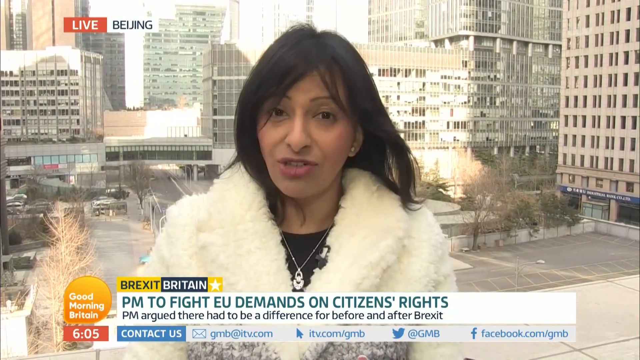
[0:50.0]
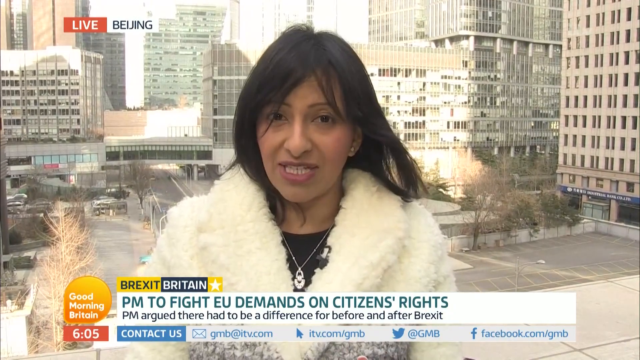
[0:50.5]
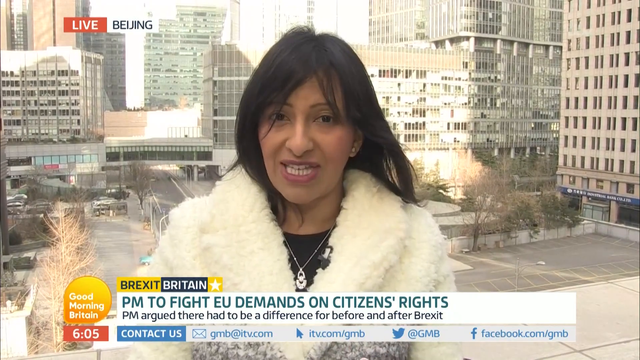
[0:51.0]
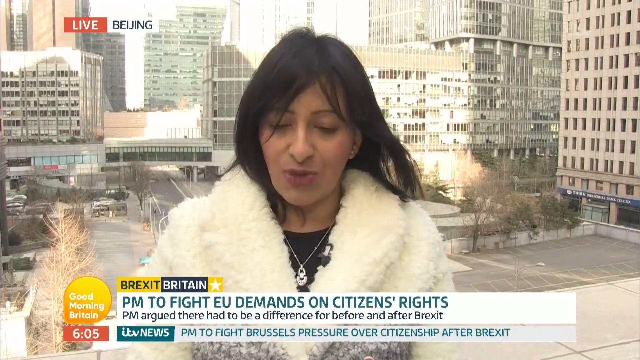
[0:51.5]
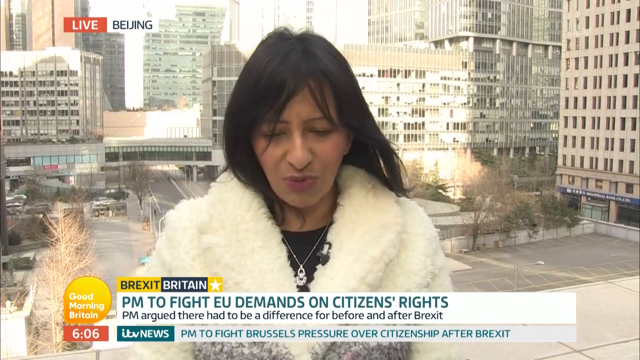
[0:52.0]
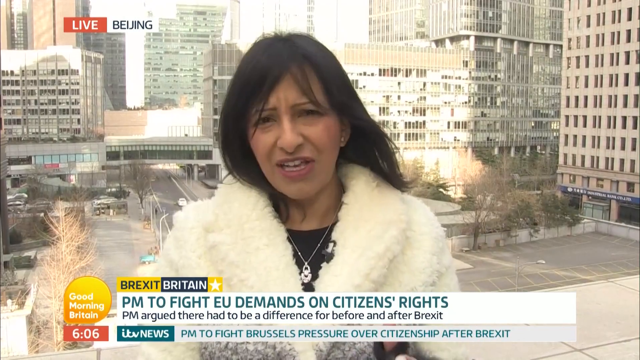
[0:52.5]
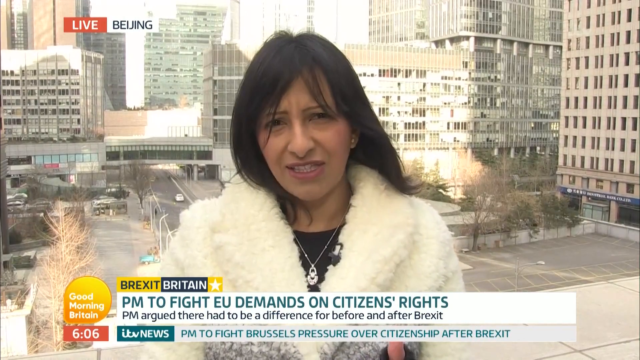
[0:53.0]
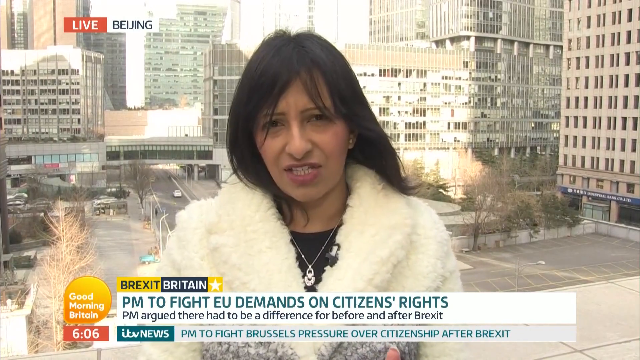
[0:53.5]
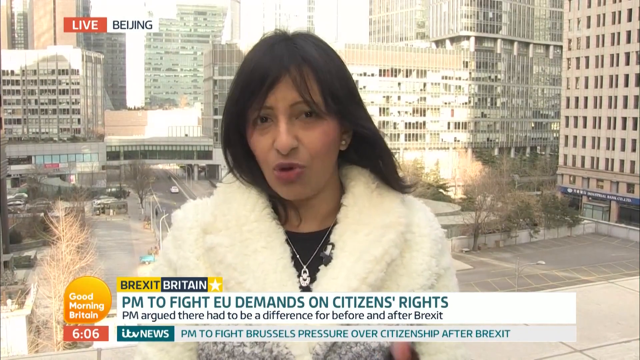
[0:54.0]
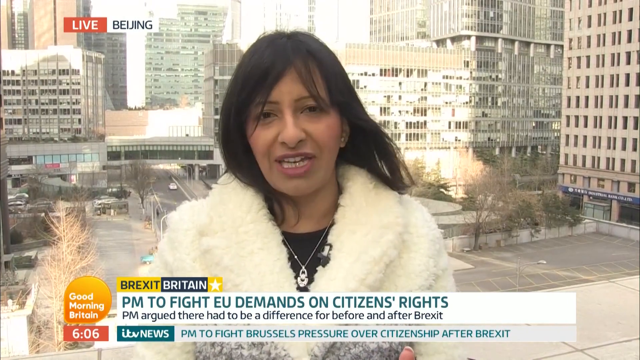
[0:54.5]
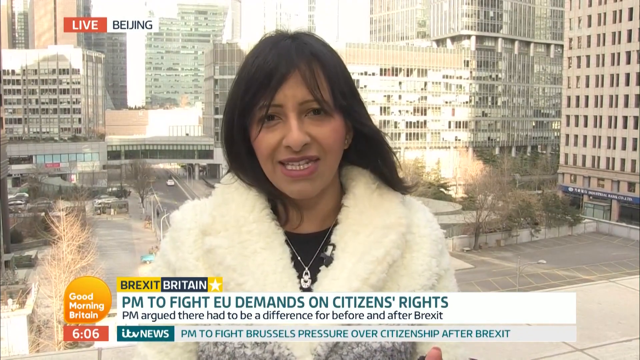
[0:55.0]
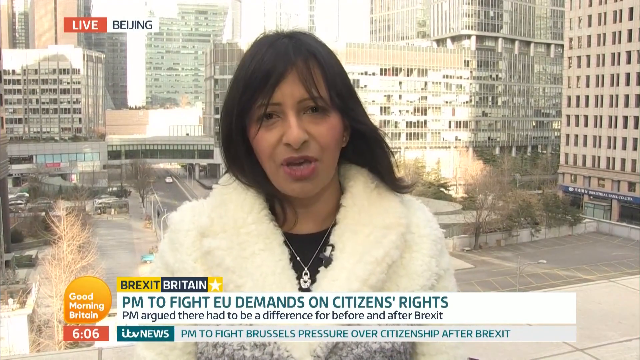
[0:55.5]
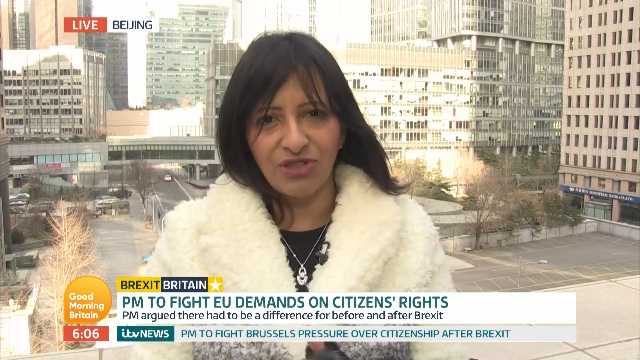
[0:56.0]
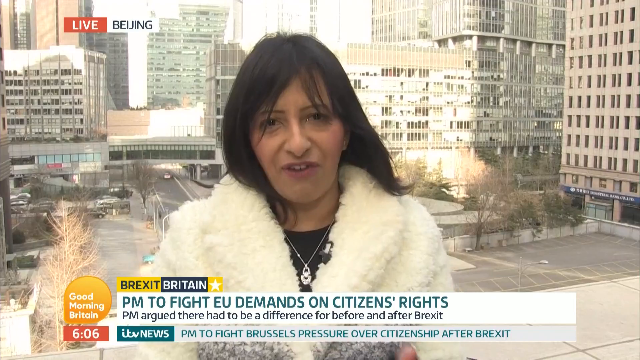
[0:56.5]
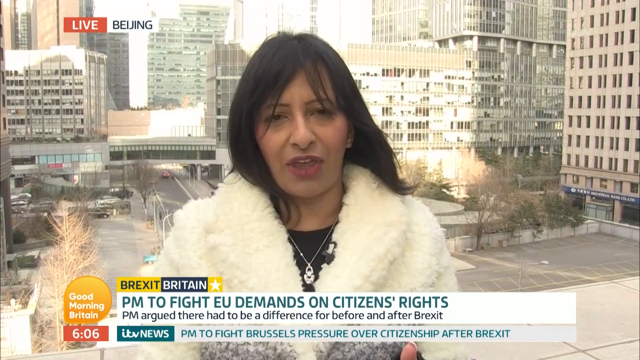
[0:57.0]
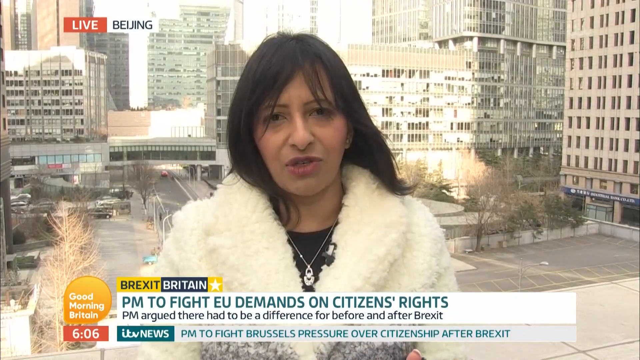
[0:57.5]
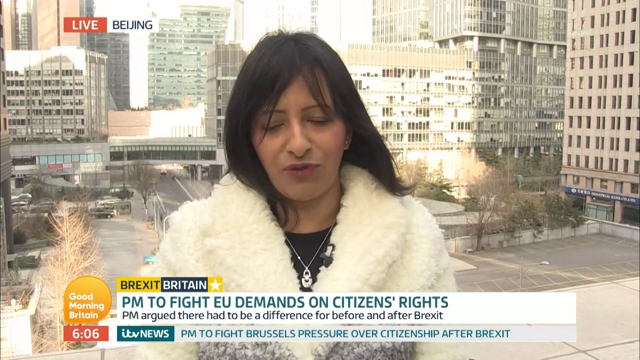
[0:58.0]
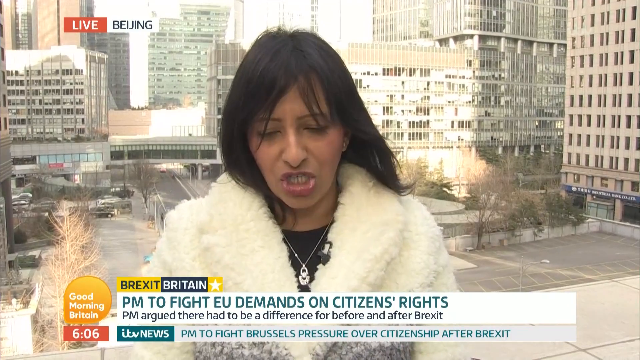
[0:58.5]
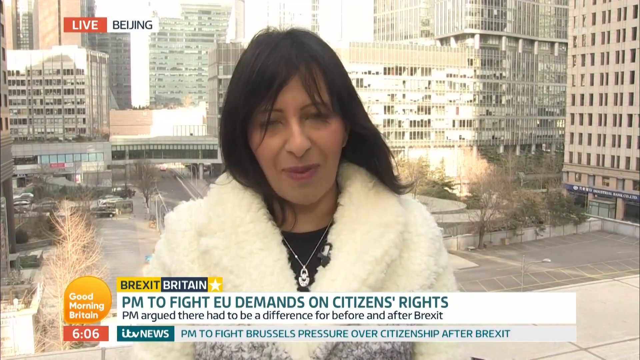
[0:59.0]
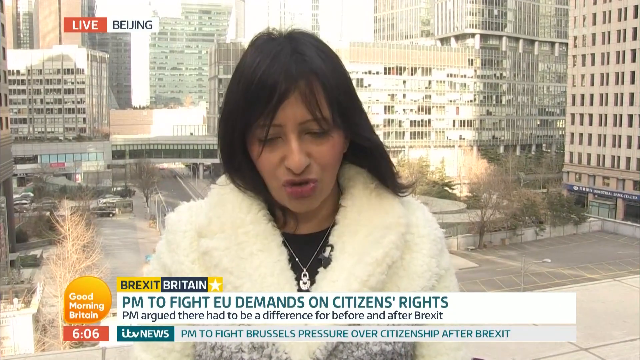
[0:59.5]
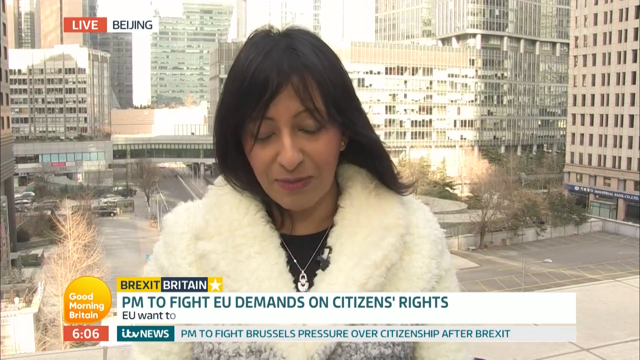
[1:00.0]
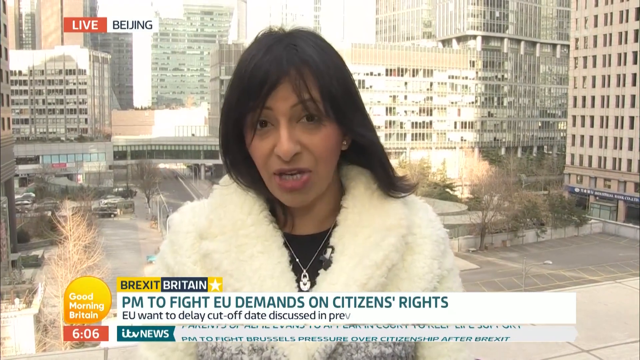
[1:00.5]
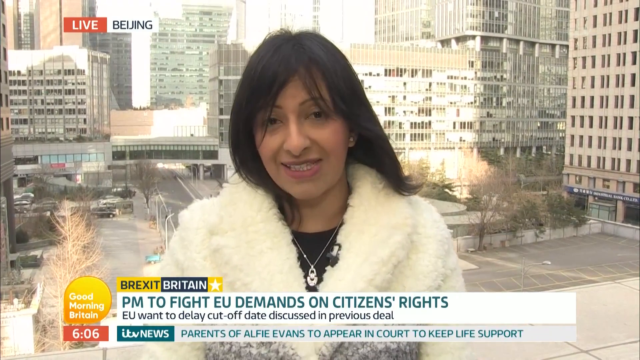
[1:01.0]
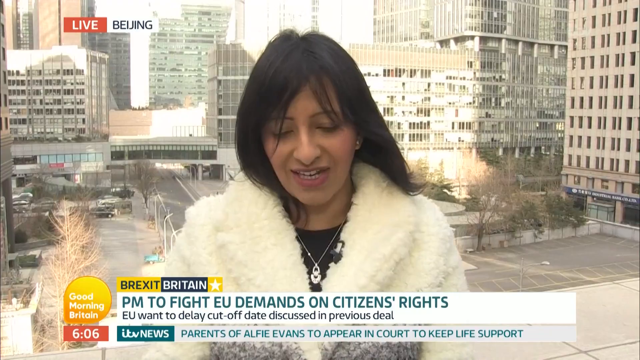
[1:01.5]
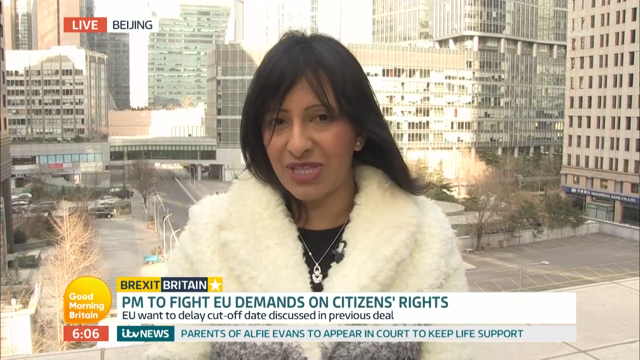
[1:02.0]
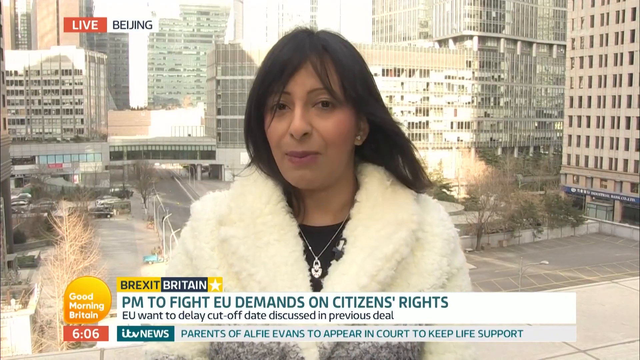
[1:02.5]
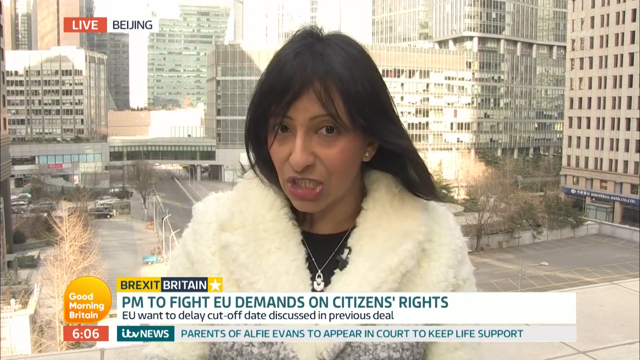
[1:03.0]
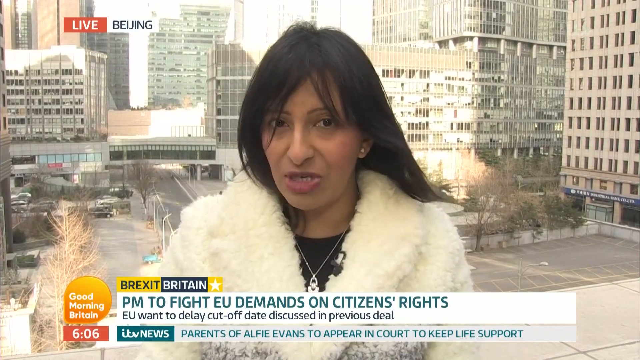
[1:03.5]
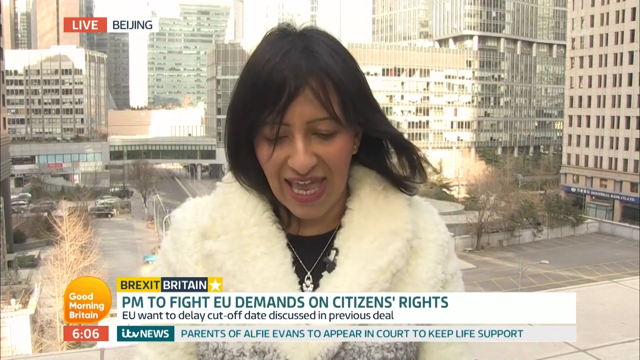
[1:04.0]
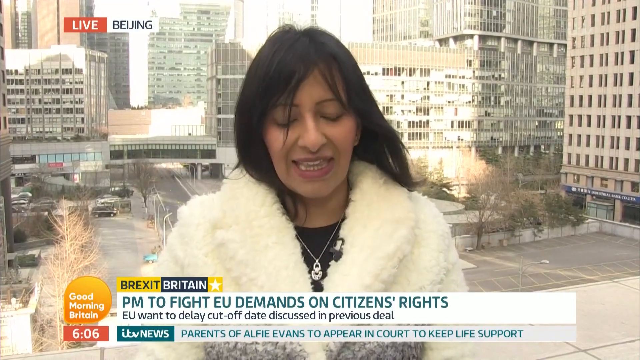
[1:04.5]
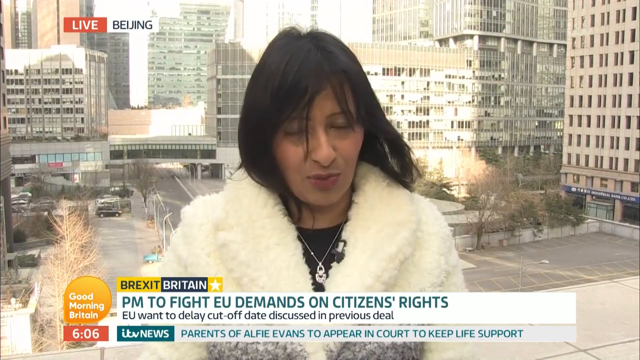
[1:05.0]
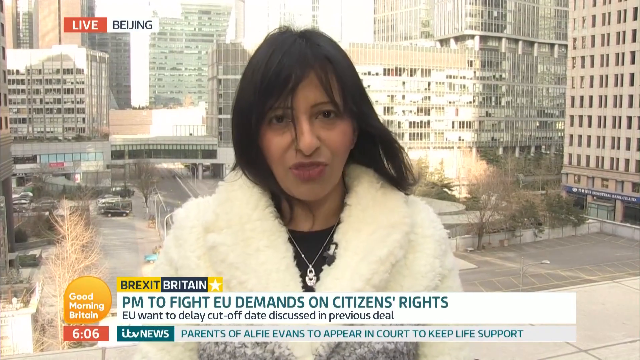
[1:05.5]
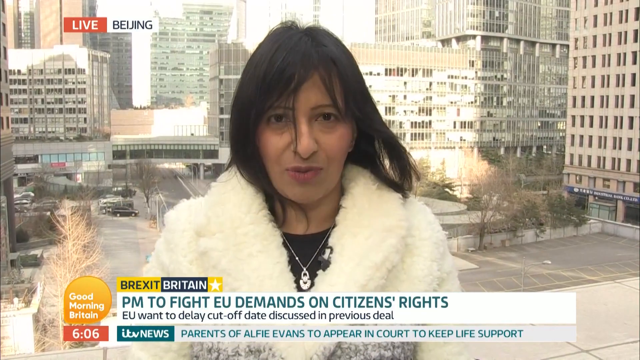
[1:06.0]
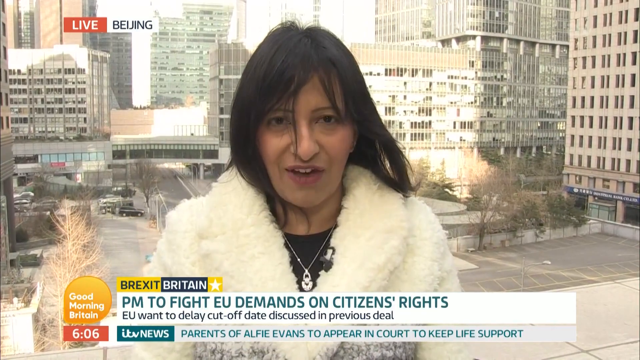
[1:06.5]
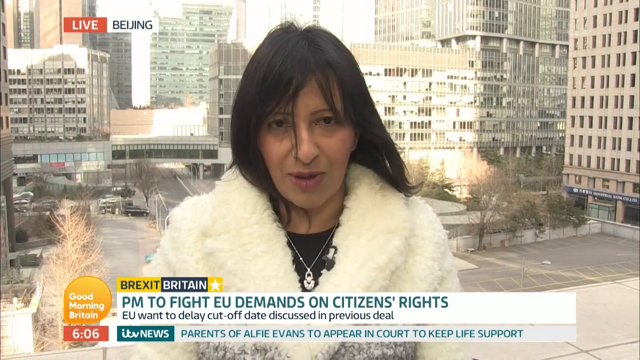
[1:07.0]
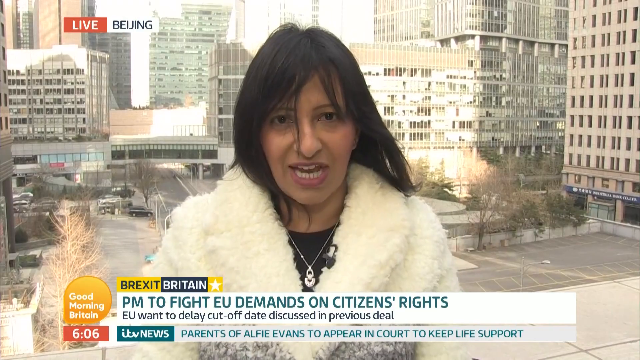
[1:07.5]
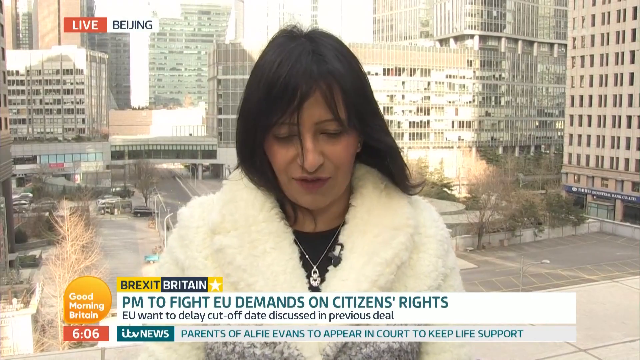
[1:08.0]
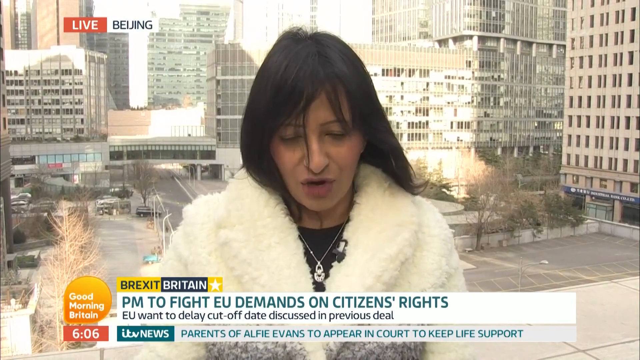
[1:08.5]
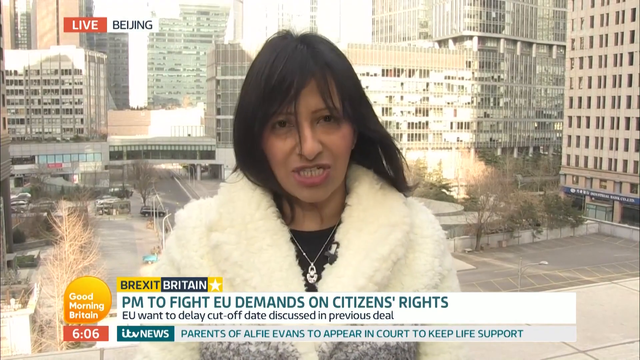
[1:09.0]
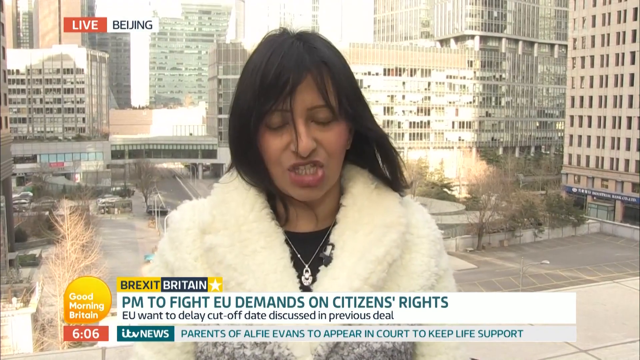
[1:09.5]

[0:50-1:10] The reporter, who looks Pakistani, wears a puff jacket and a weave, and she is white. She appears to be reporting on the PM fighting the EU on demands on citizens' rights. Text underneath says "PM argued there had to be a difference before and after Brexit". There are no people around the city, just a few cars passing, and it looks like the city is on lockdown. She seems to be reporting from outside, as her hair moves in the wind. As she continues, further text underneath says "EU wants to delay cut-off date discussed in the previous deal".